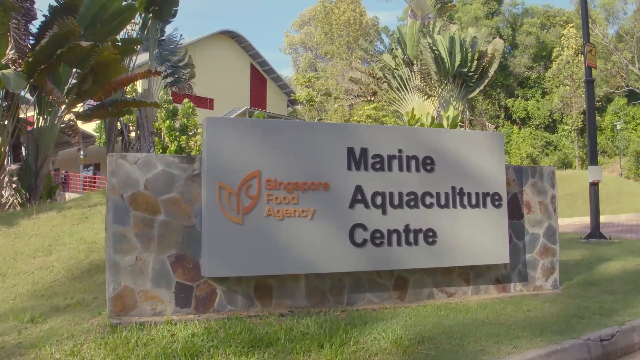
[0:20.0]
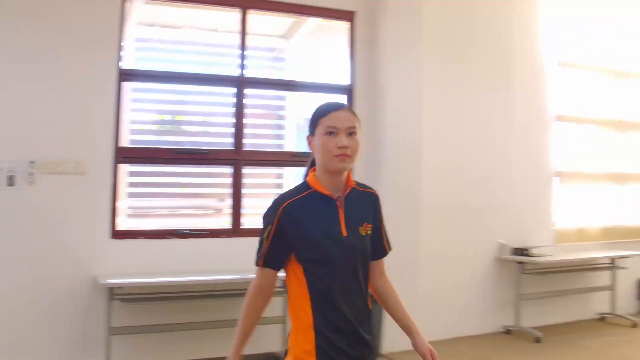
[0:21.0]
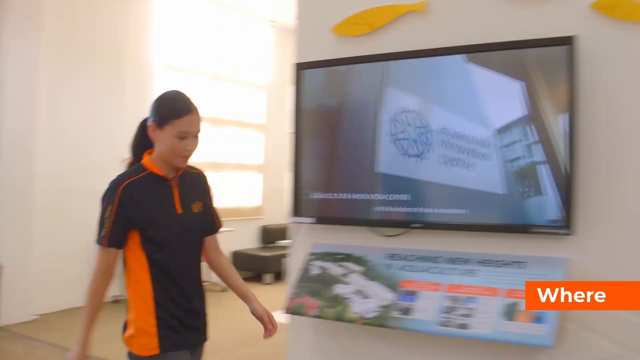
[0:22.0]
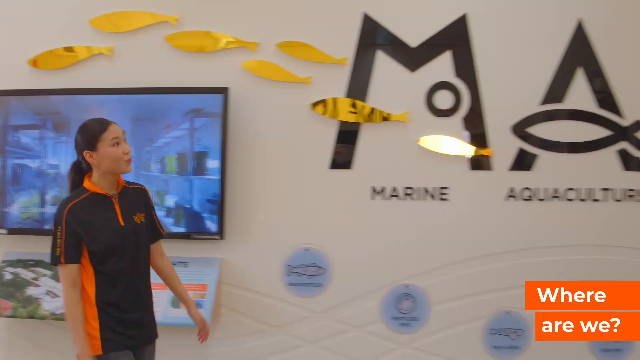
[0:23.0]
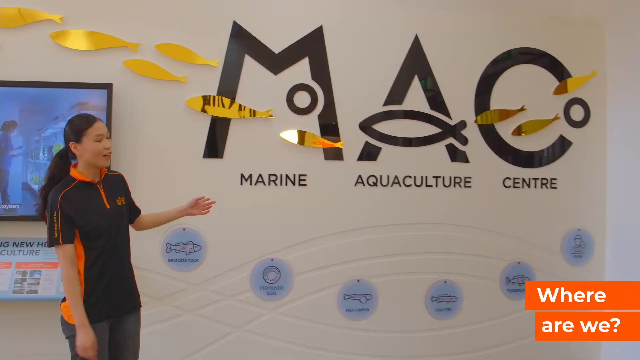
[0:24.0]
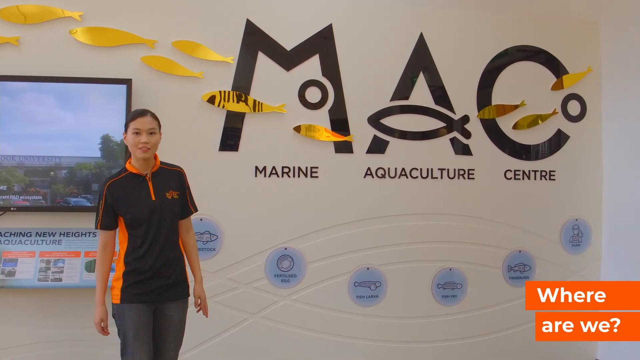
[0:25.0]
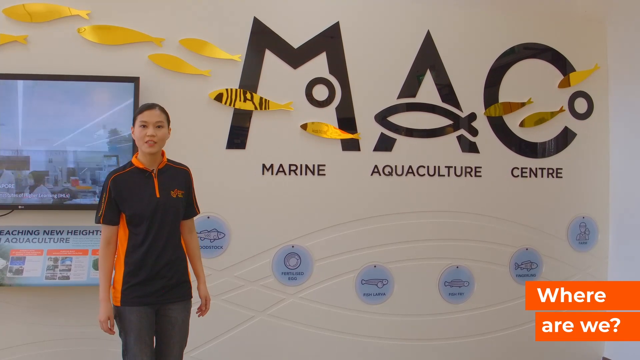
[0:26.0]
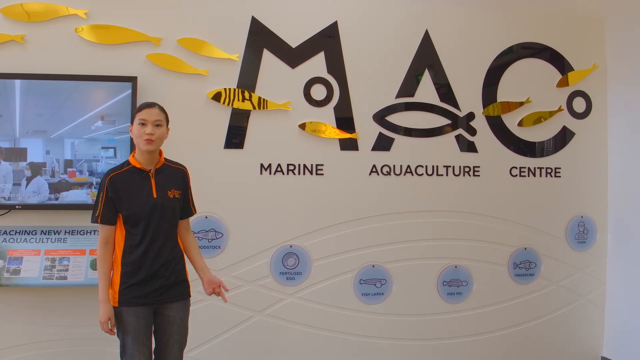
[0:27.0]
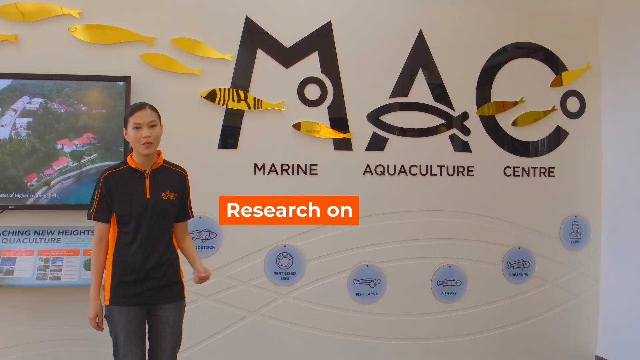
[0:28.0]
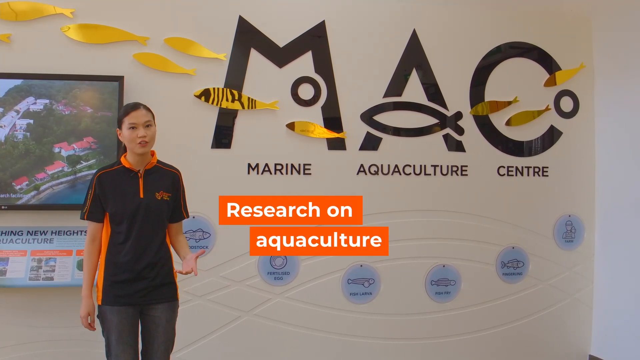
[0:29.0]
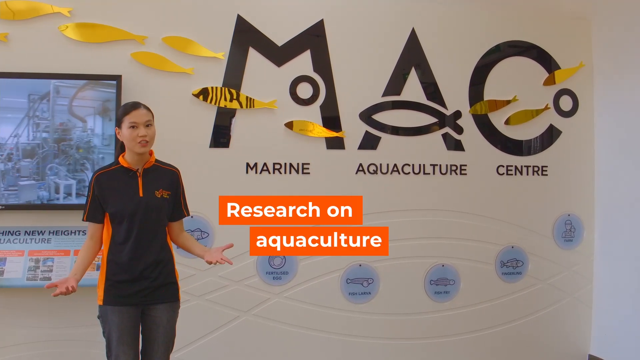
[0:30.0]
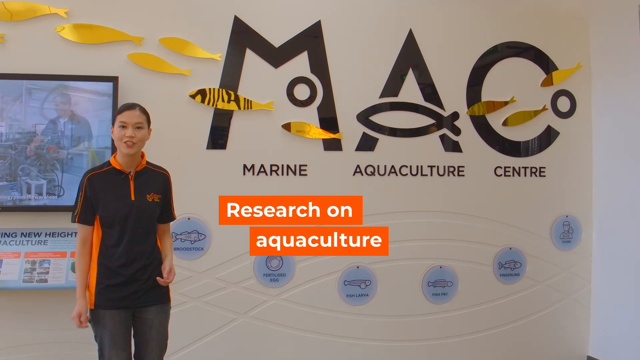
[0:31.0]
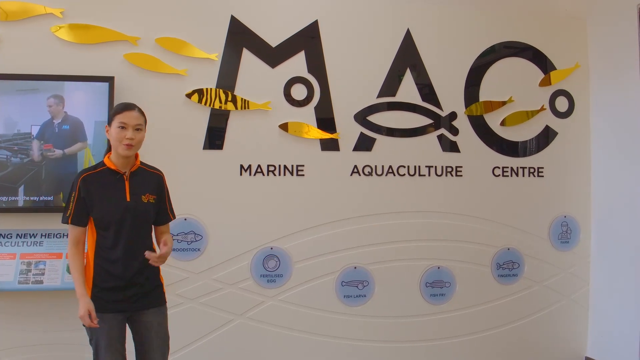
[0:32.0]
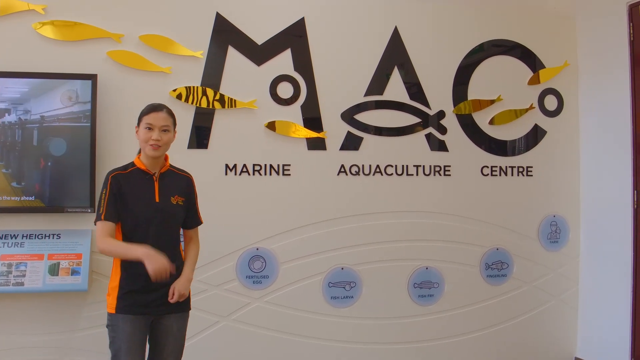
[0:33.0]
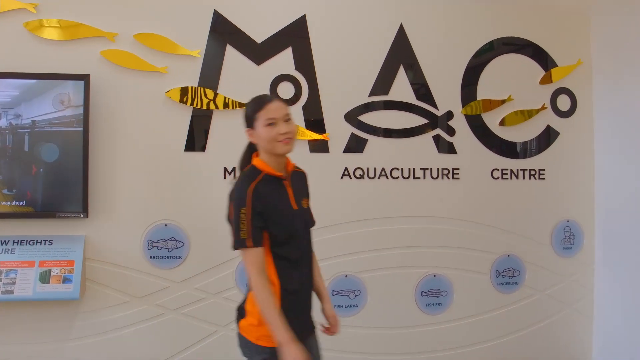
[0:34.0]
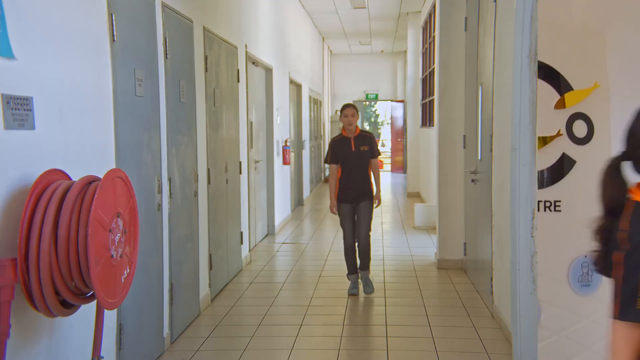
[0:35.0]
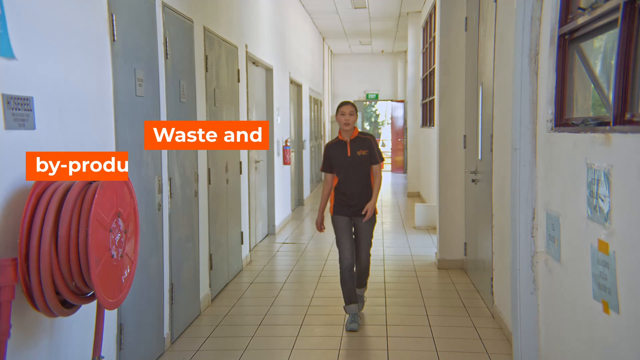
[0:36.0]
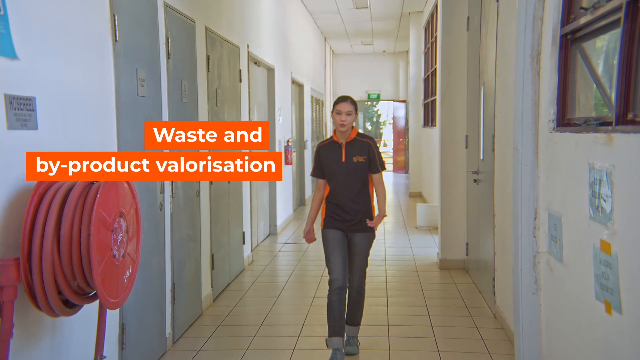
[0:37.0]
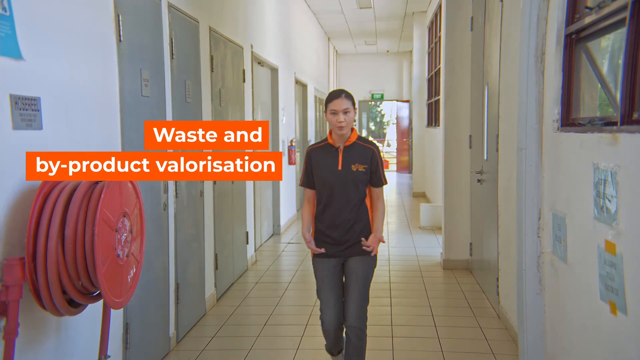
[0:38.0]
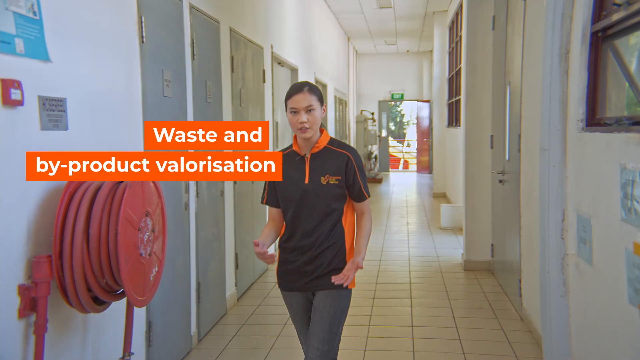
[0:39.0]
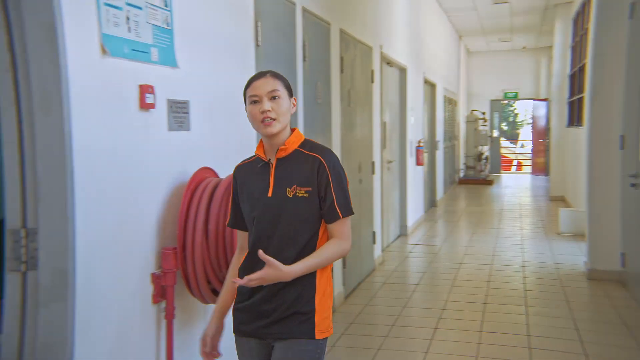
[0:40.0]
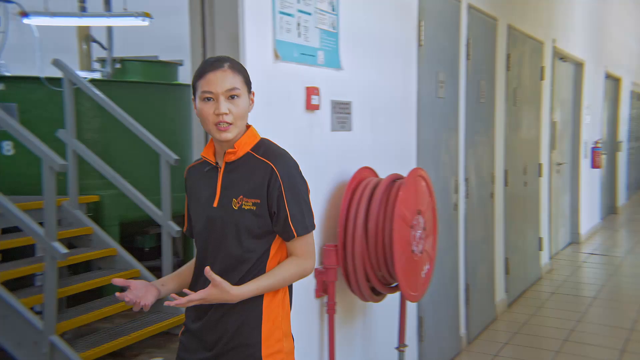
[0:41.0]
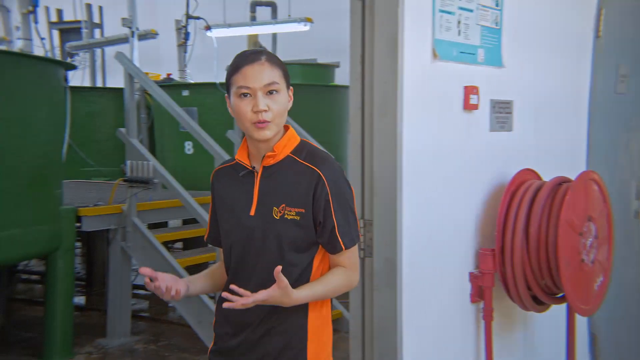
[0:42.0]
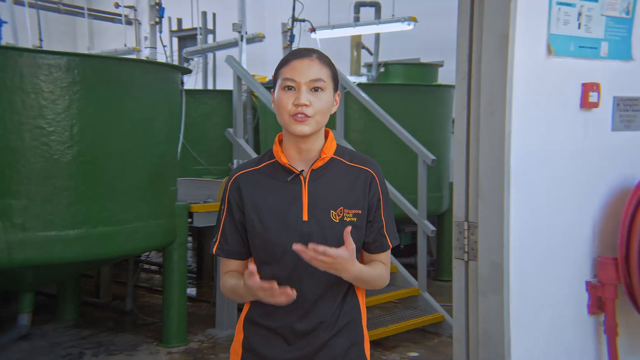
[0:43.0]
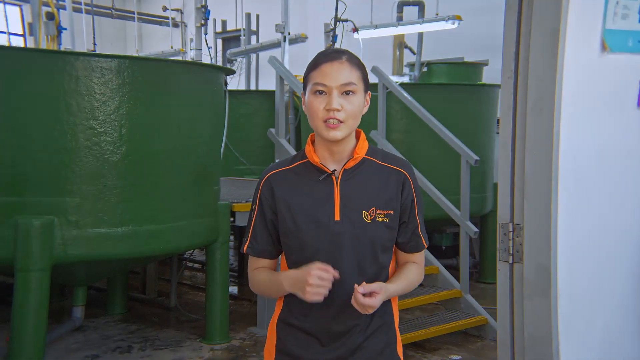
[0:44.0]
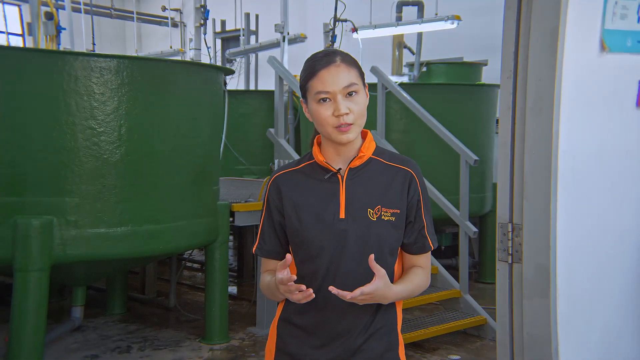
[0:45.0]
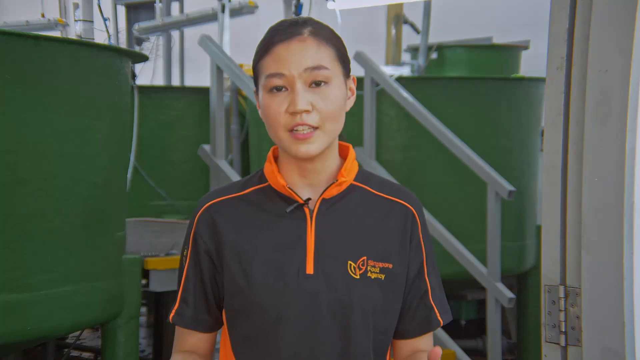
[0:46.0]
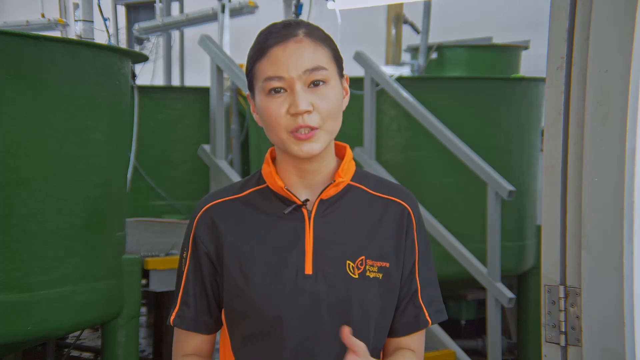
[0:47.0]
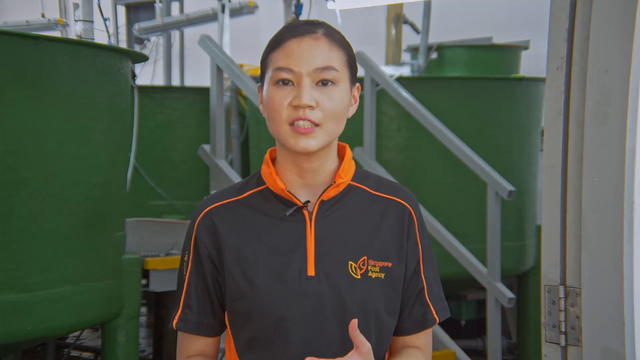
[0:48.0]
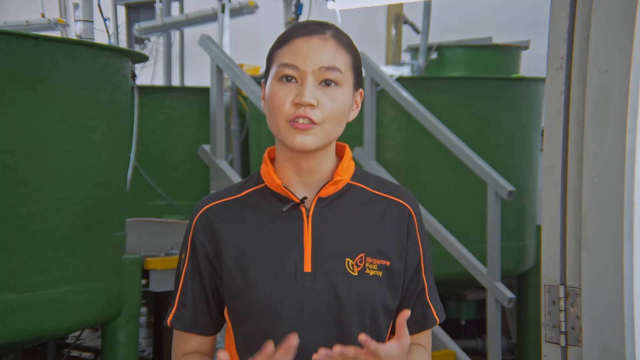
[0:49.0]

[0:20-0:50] An outdoor area shows a large sign that appears to be made of stone and cement, bearing the words "Marine Aquaculture Center". To its left, "Singapore Food Agency" is written in orange. To the right of the sign is a tall black light post. The sign is positioned in bright green grass in front of the building. There are lots of trees in the background, including palm trees and other varieties; they appear to be mature, full of vibrant green leaves. It appears to be spring or summer, or at least a warm season. The building in the background is yellow and burgundy. A woman wearing a short-sleeved black and orange top enters the building, where a logo on the wall identifies it as the Marine Aquaculture Center. She then walks down a hallway of the building, speaking to the audience and emphasizing her words with her hands. The words "Waste and by-product valorisation" pop up on the screen.